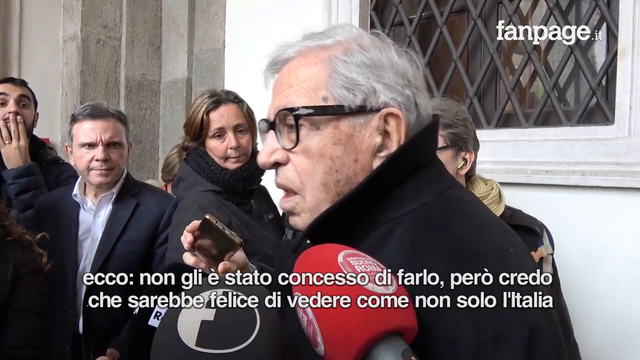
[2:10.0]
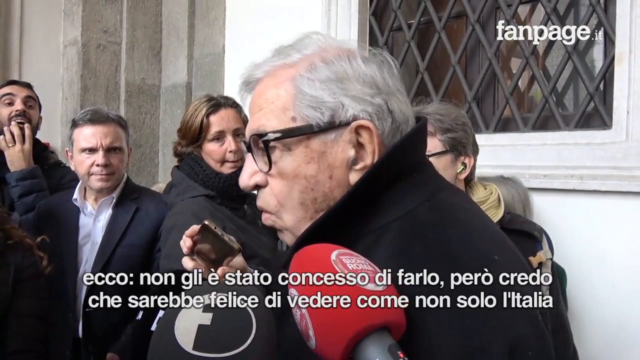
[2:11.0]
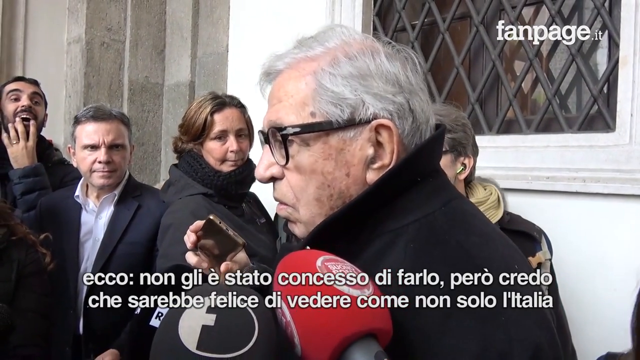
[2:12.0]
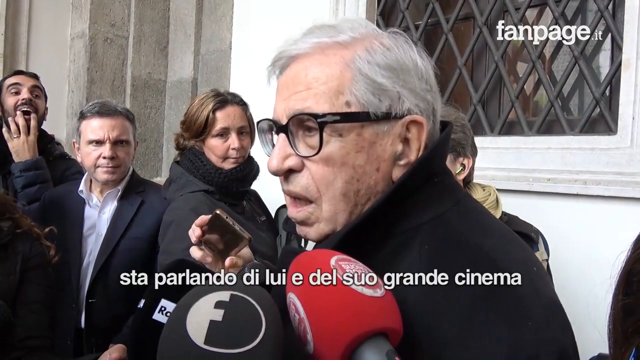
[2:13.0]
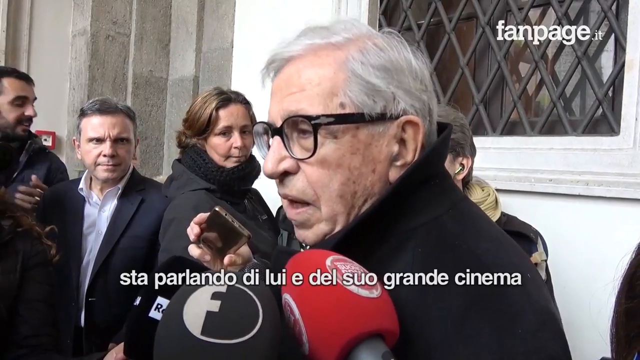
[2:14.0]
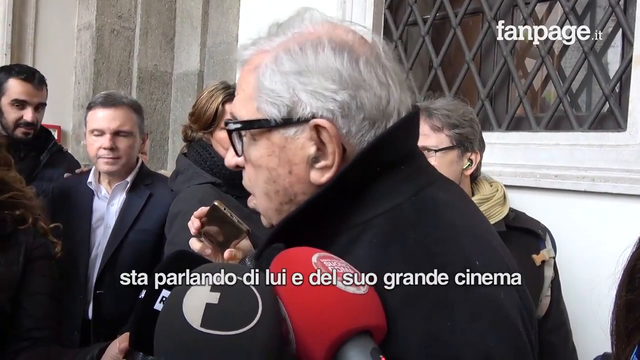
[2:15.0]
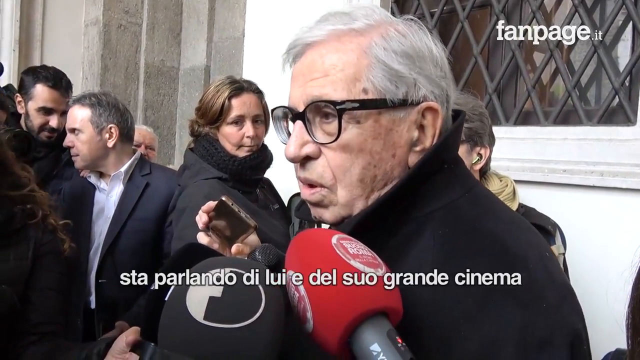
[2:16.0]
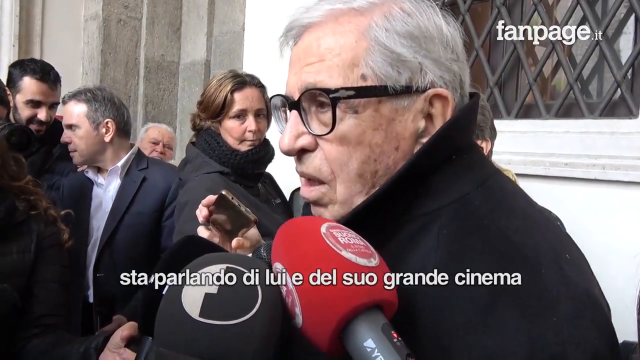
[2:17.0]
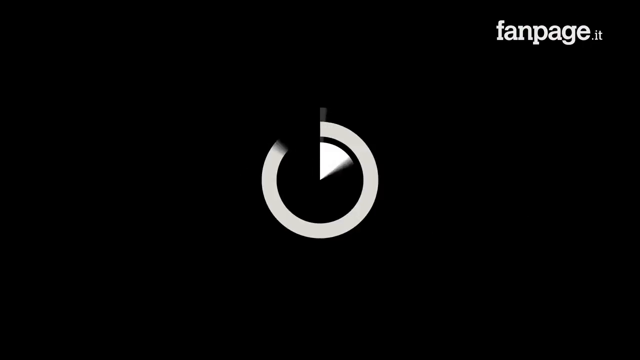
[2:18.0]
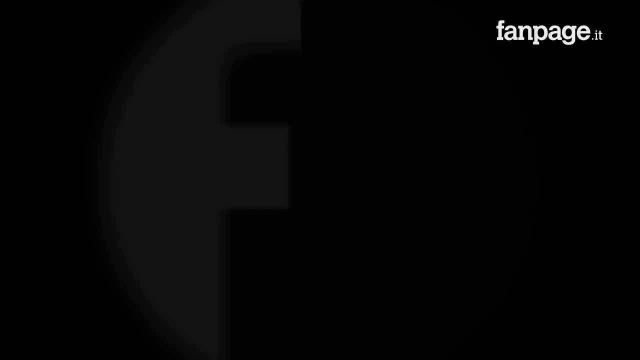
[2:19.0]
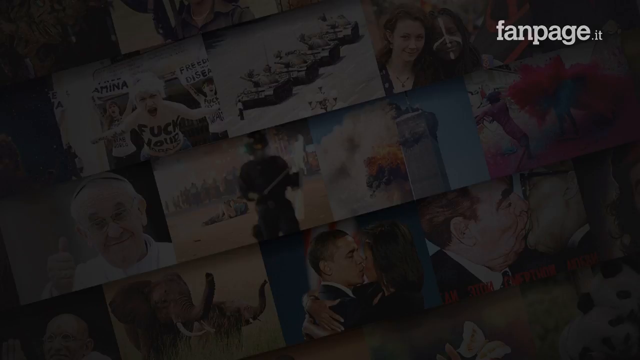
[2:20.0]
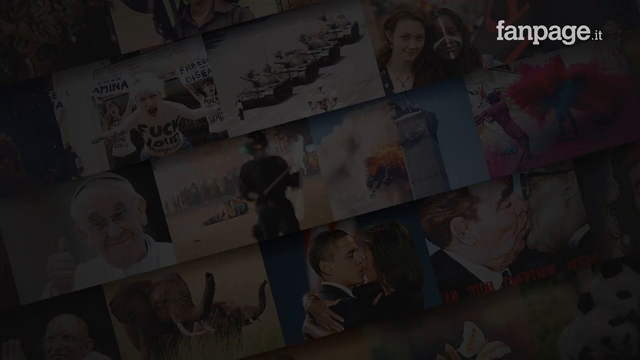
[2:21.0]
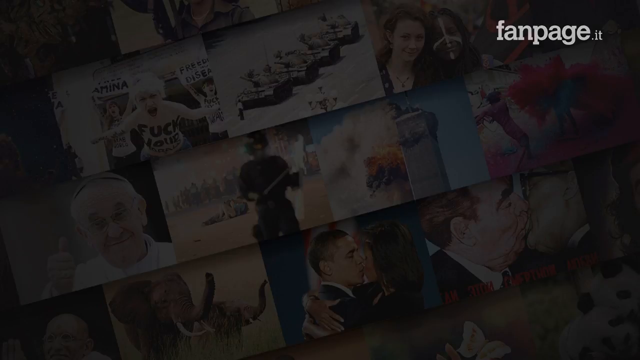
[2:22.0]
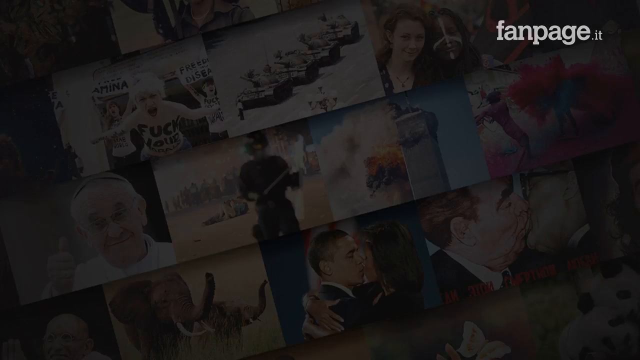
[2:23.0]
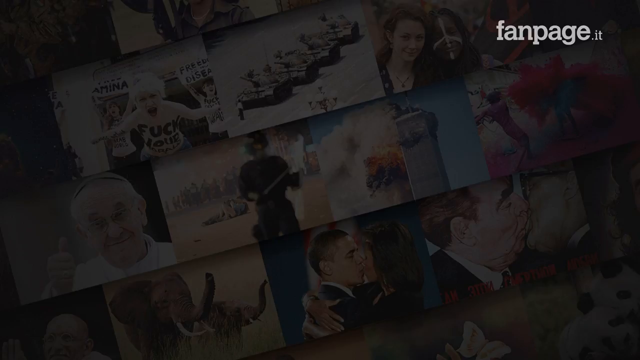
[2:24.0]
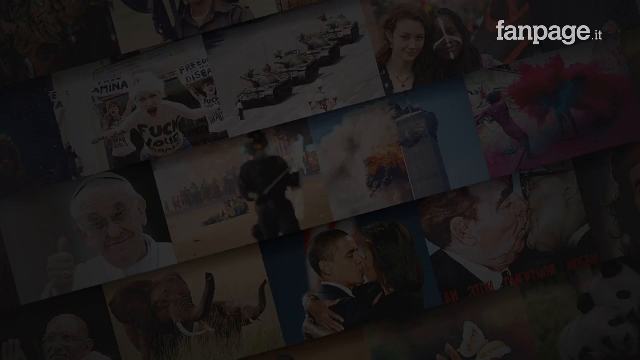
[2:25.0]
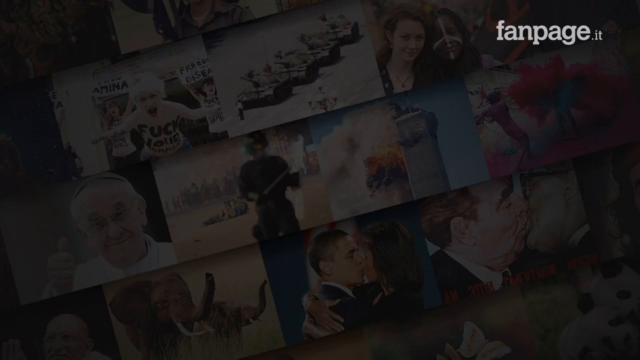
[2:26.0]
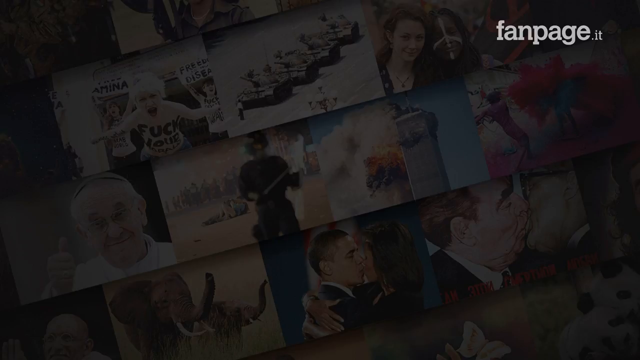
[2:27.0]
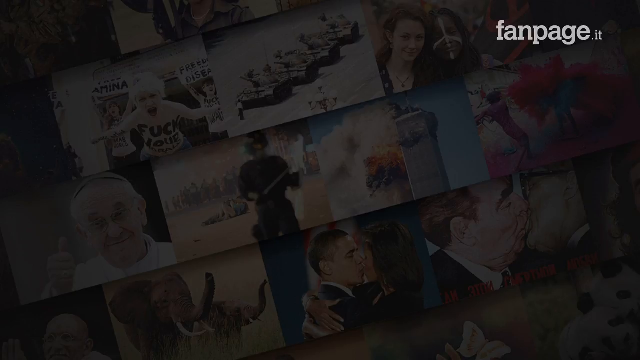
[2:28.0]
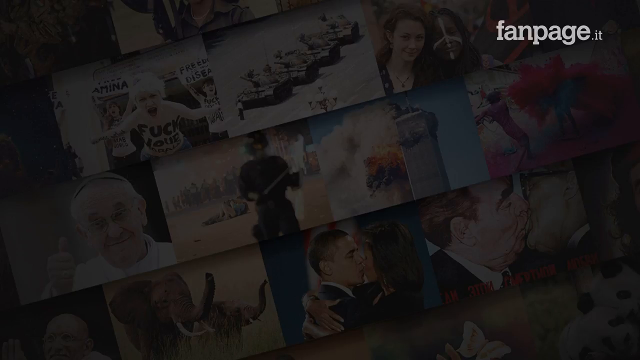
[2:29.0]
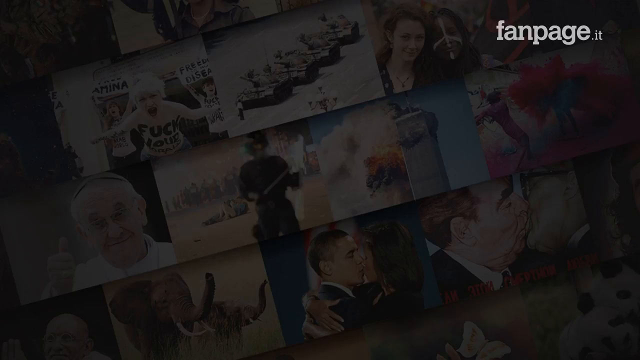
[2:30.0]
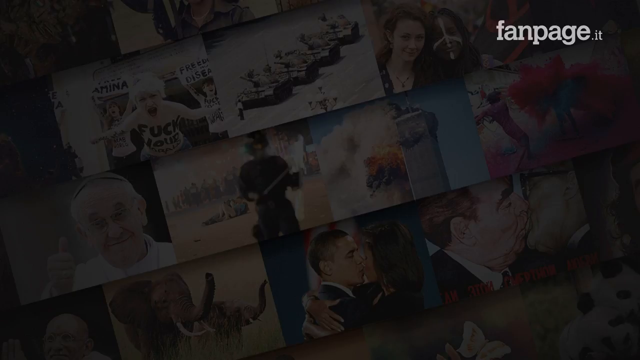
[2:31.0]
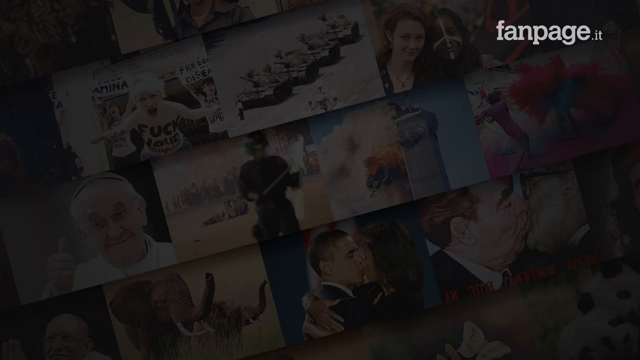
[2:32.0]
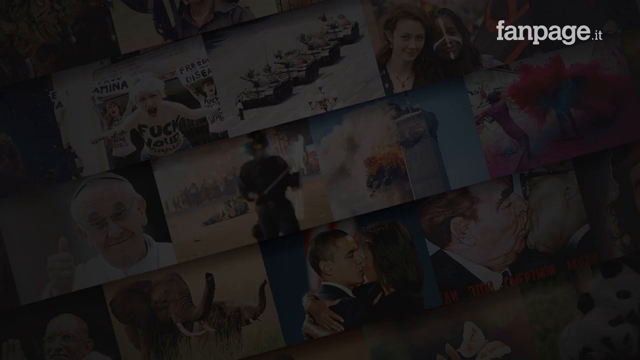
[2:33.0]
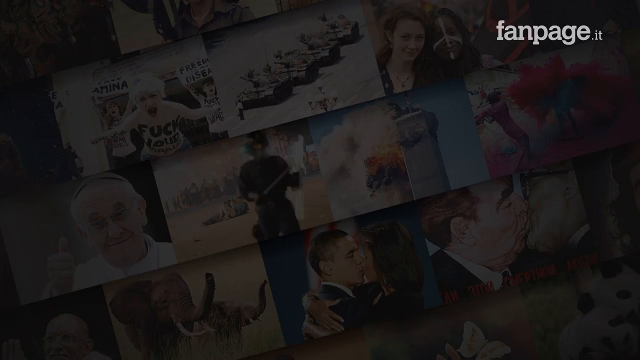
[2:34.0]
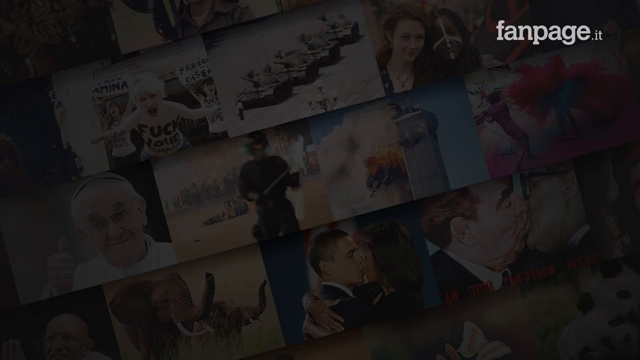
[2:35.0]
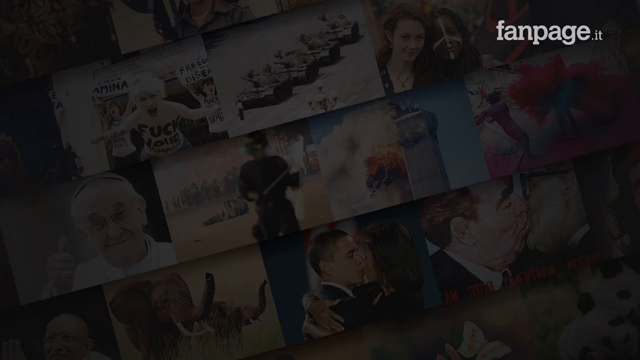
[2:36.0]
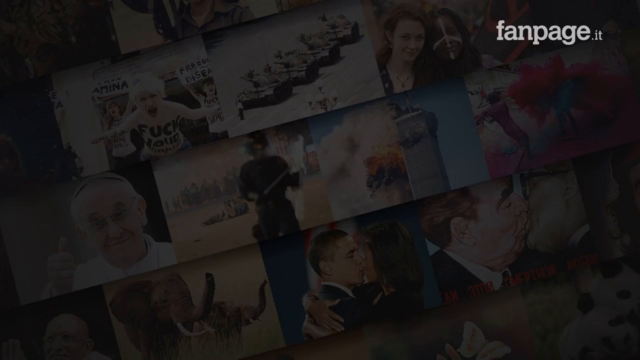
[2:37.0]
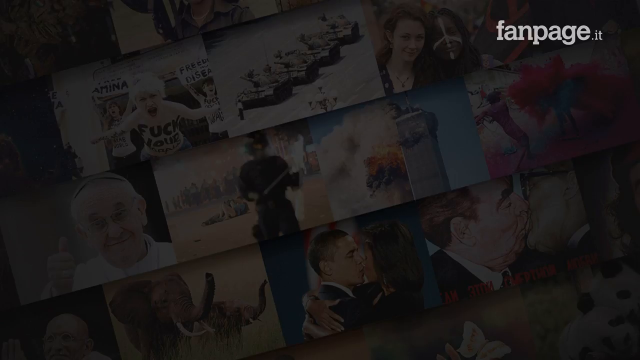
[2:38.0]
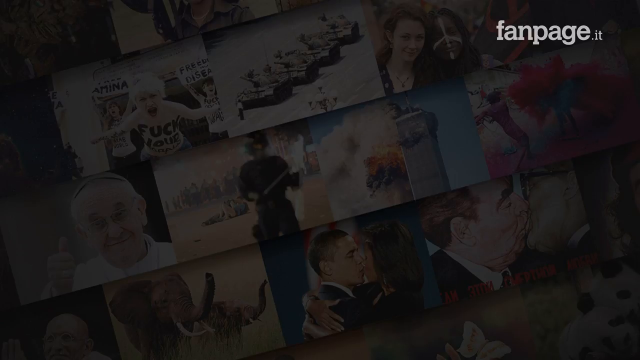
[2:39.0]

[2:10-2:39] The same man continues with the same mannerisms, moving around while everyone around him stays still and calm. The video then cuts to black and to the ending credits, with "fanpage.it" in white text at the center of the screen and also at the top right corner. It then cuts to the collage of world events, some recent and some from 20 or 30 years ago. One picture shows the Twin Towers with one tower burning, another shows a protest of topless feminists with writing on their chests and holding signs, and another is a pop-art-like picture of two men kissing who look like politicians. The collage stays on screen until the end.